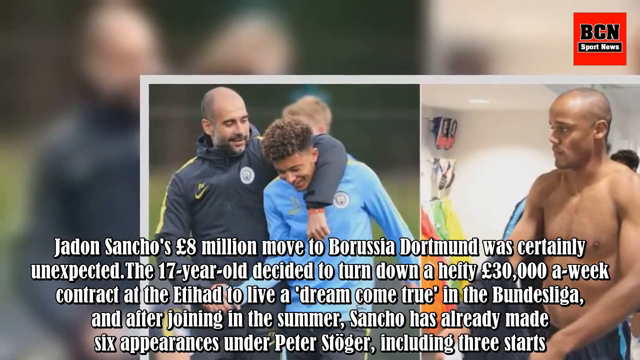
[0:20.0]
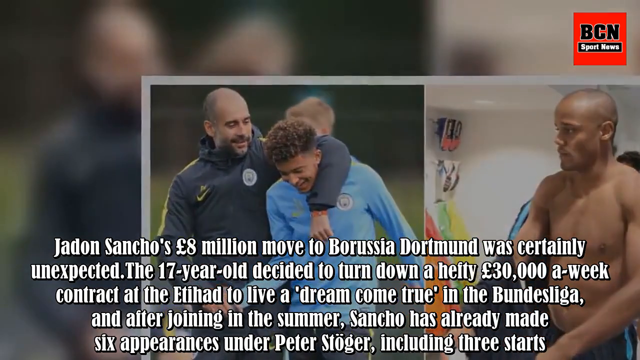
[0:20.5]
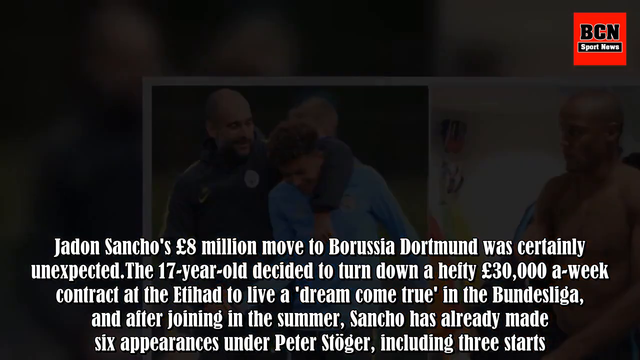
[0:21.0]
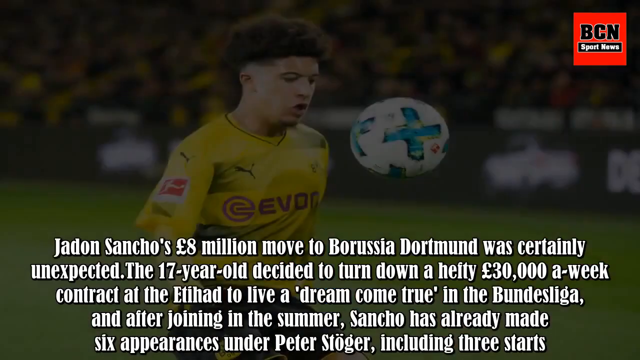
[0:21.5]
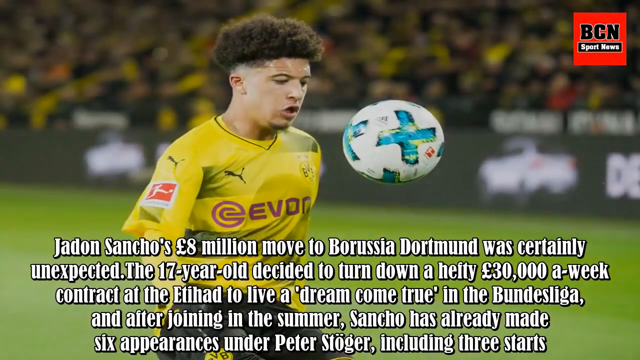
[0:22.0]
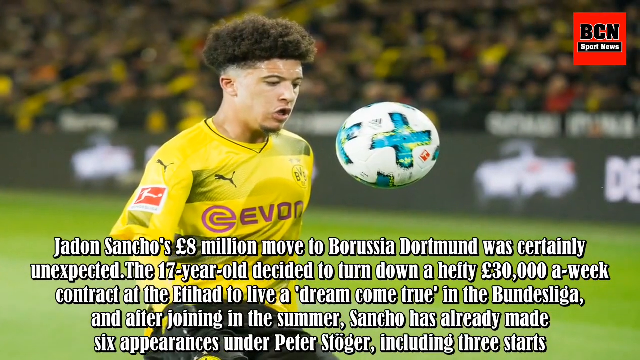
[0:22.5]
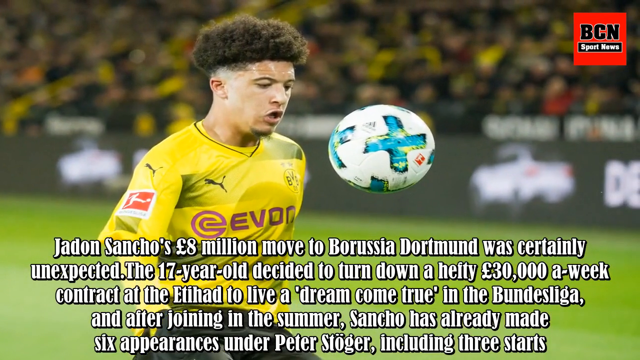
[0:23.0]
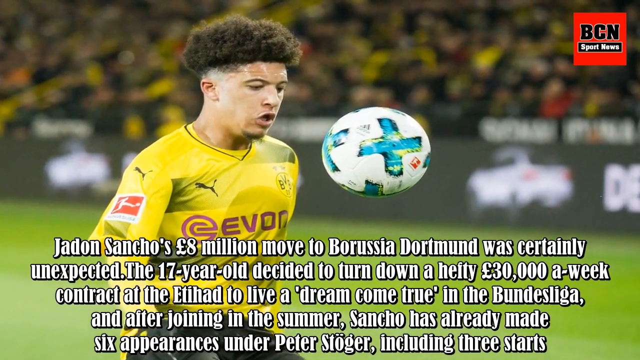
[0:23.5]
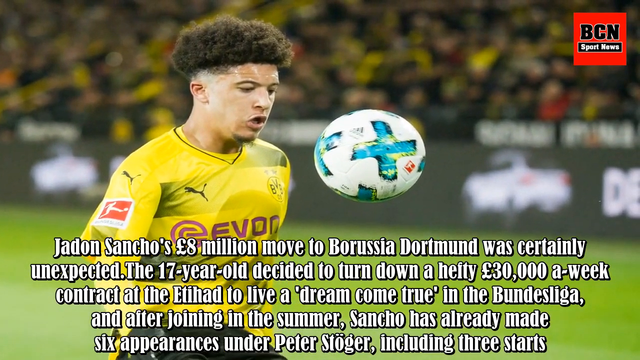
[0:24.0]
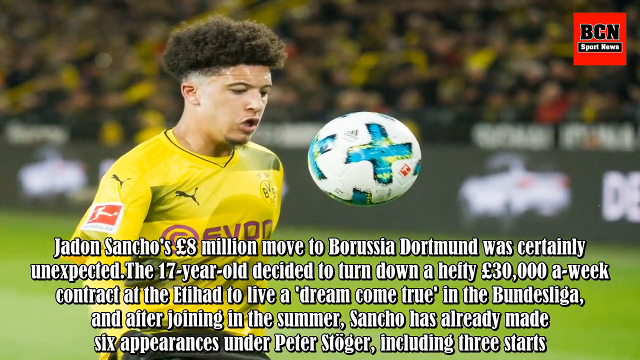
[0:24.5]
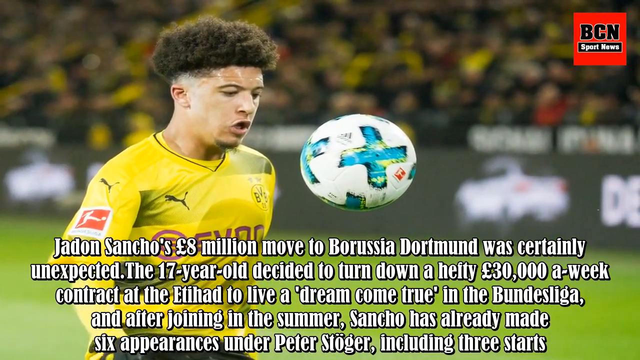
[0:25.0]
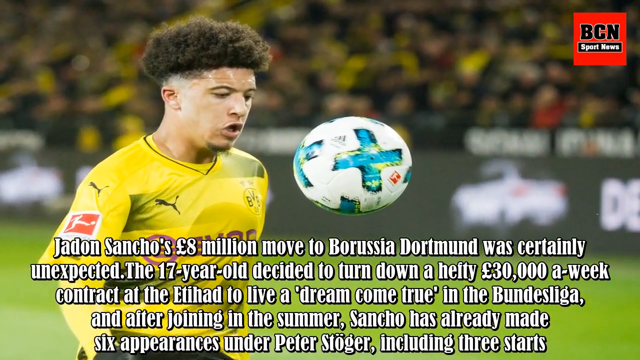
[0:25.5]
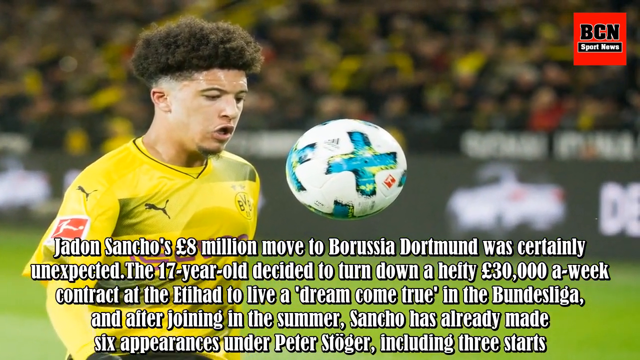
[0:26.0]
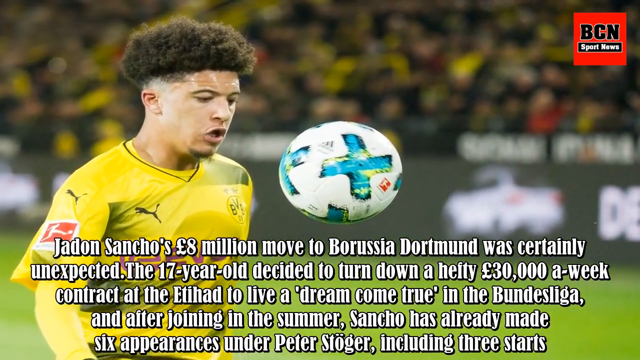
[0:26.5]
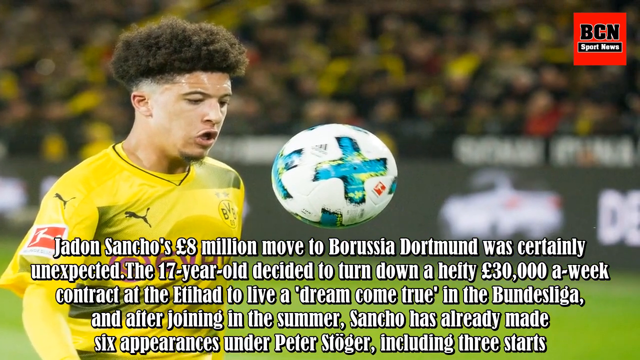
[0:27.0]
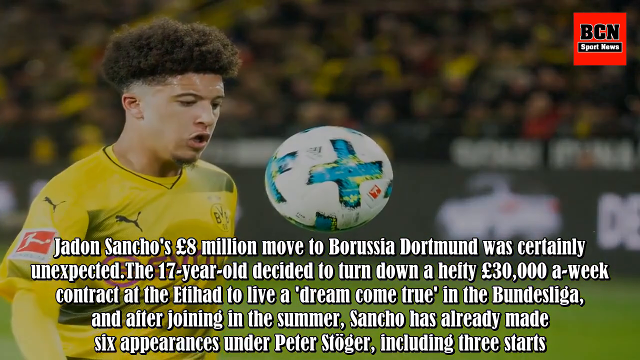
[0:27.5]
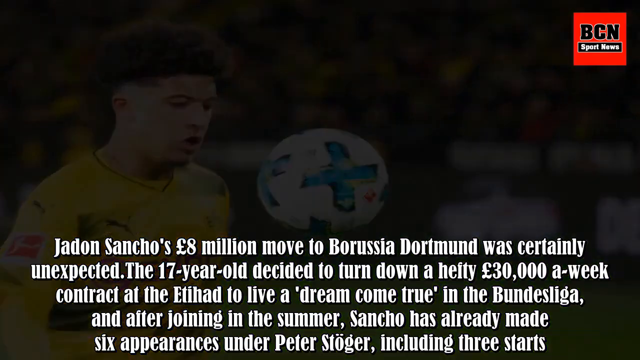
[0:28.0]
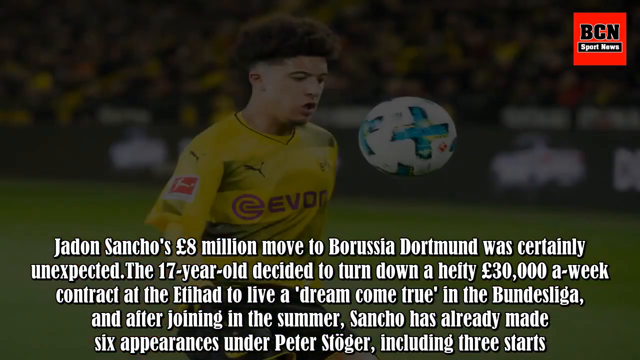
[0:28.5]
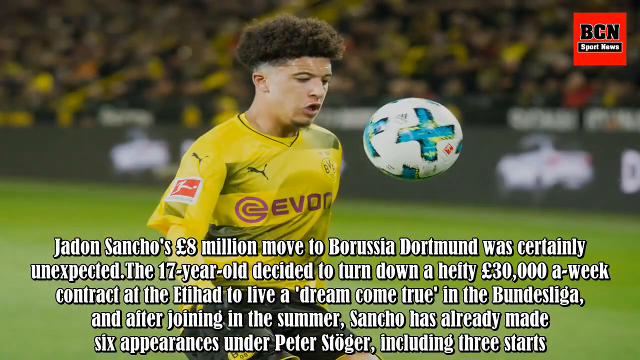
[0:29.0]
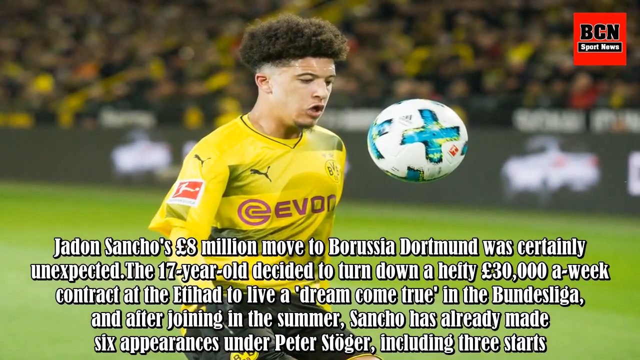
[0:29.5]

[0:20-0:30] A picture is split in half, with two pictures inside it and a white frame around it. On the left, a soccer player in a light blue jersey is being hugged by what looks like a coach, who has a beard and wears a black jacket. On the right, another soccer player is taking off his shirt. In the foreground is white text, apparently explaining what is happening in the picture. The picture then fades away, and another soccer player in a yellow jersey appears with a ball hovering over his chest to the right of him; he is staring right at it.